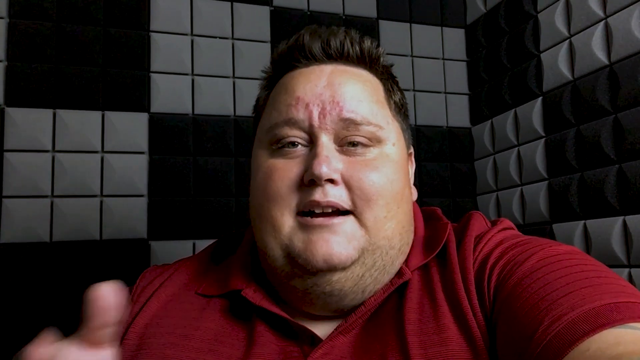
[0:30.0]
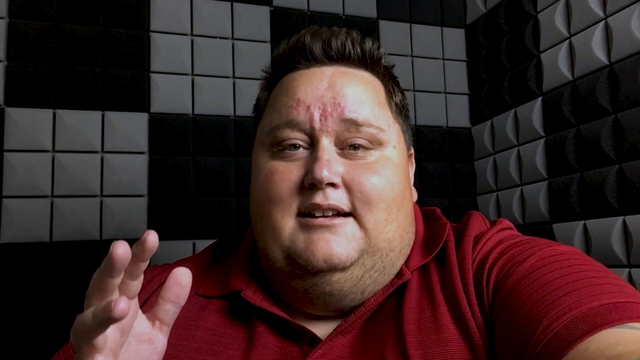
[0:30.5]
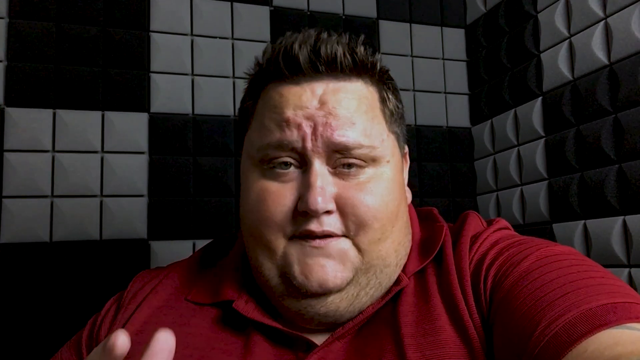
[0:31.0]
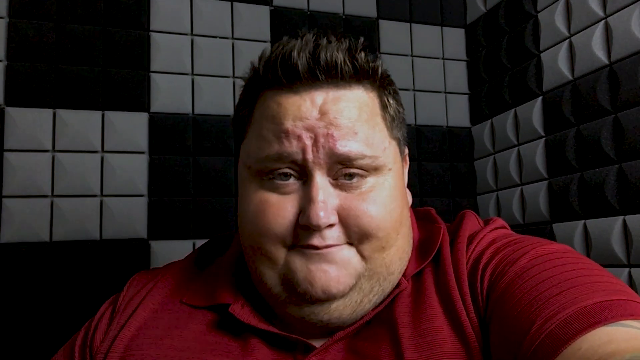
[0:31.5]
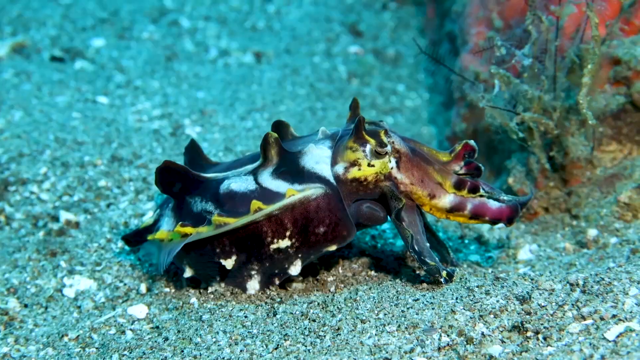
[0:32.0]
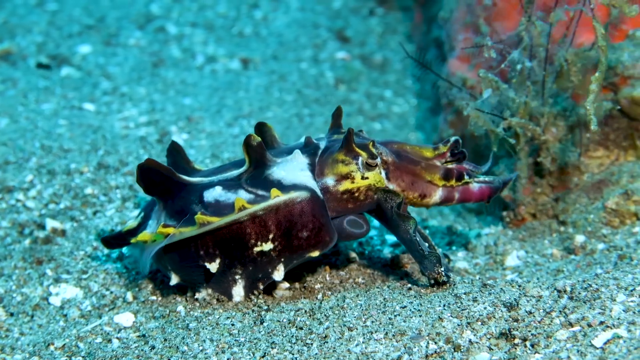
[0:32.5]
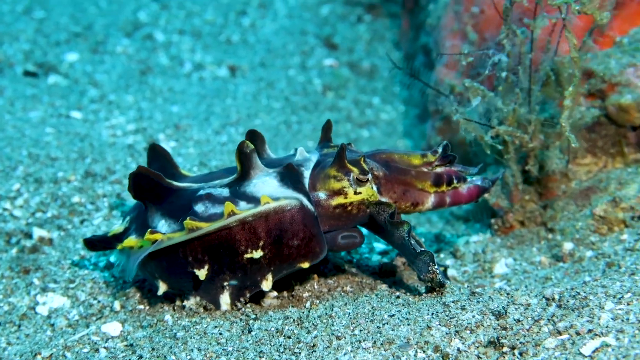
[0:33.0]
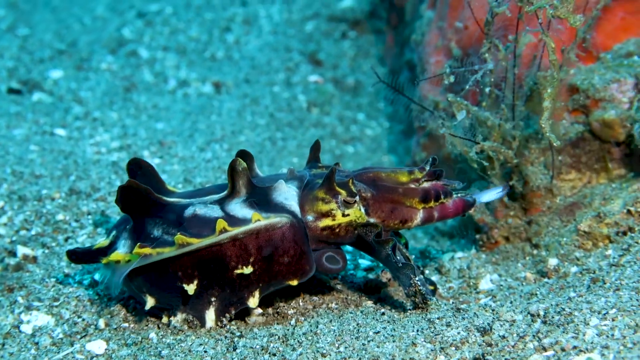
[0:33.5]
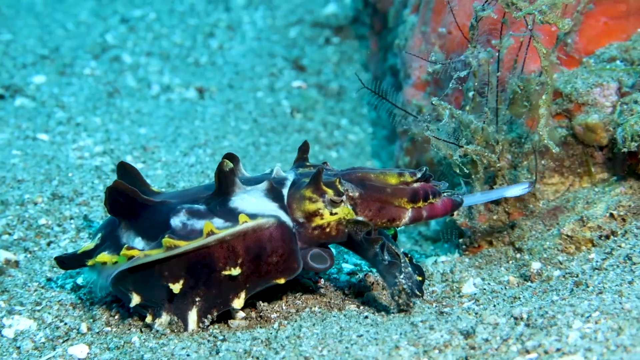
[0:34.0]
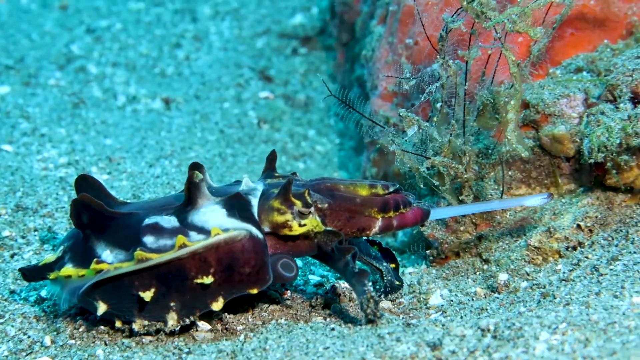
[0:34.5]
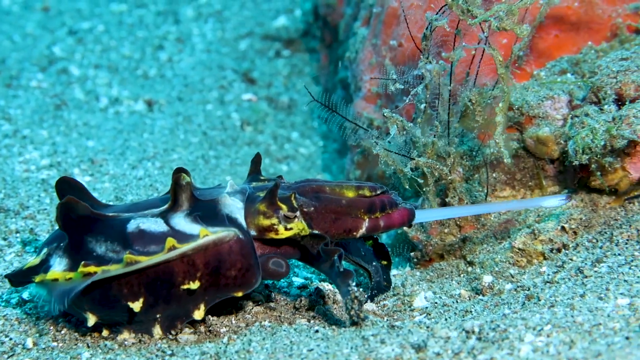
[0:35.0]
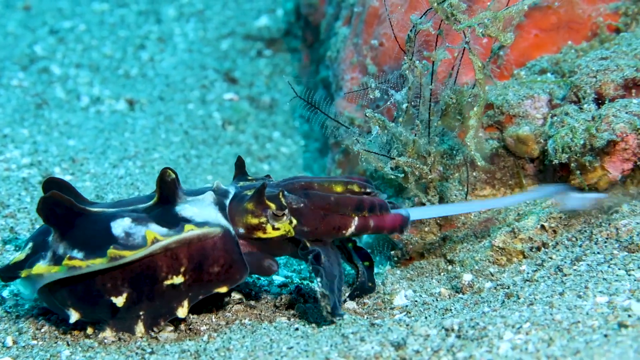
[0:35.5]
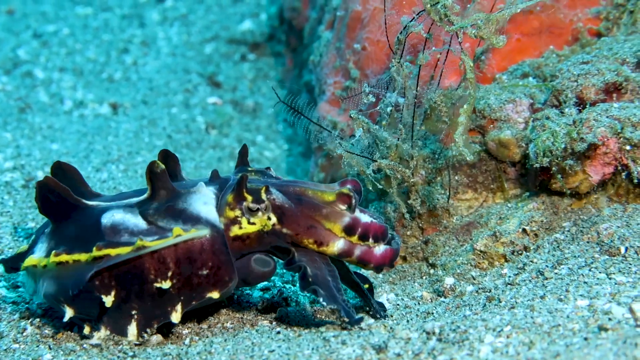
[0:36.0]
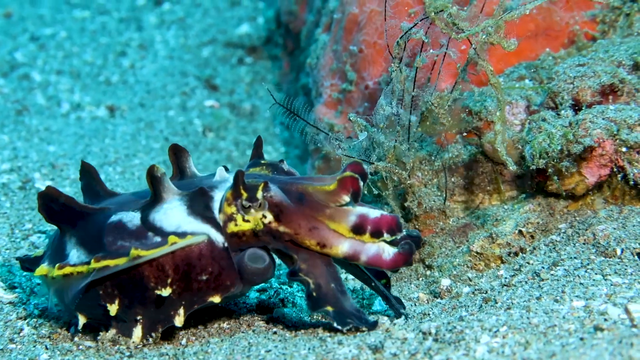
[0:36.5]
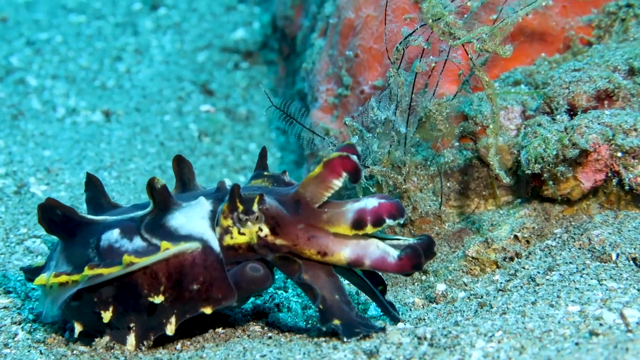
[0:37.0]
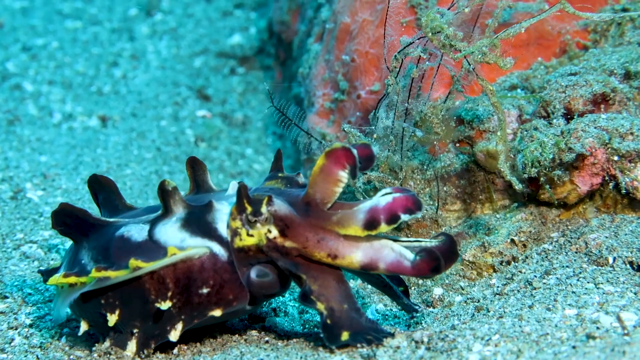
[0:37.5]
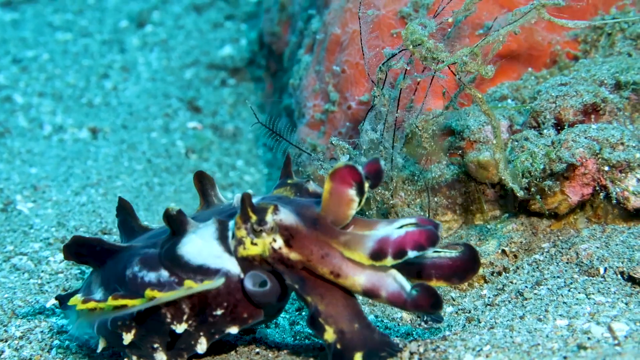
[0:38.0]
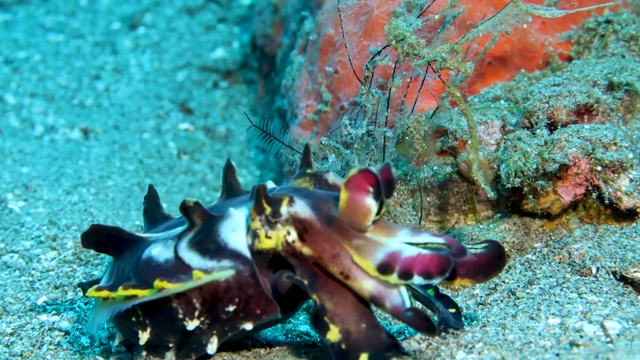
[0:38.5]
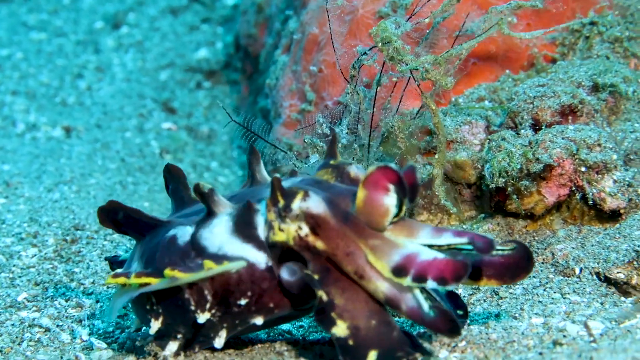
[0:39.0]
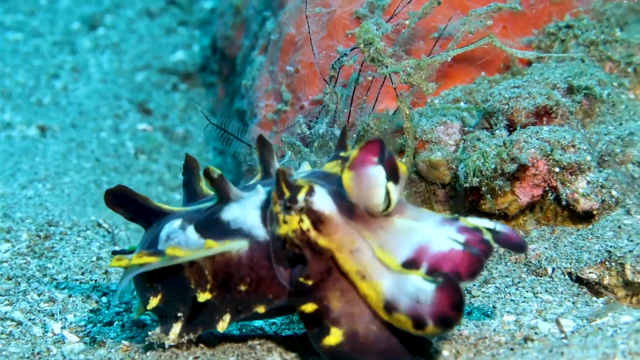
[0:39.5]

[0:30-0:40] The obese man sits in a room wearing a red t-shirt; he has no neck, and black and gray tiles are visible behind him. He gesticulates and slightly moves his head forward as the video transitions to a cross-stitching animal on the water. The water is light blue, and the animal has various colors, predominantly yellow, white and blue. A sharp, ruler-like thing comes out of the animal's mouth and extends to grass underwater; it appears to be the animal's tongue. The tongue suddenly retracts back into the animal's mouth as the tentacles separate.